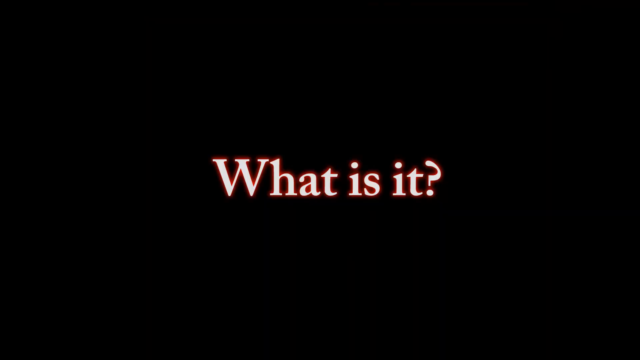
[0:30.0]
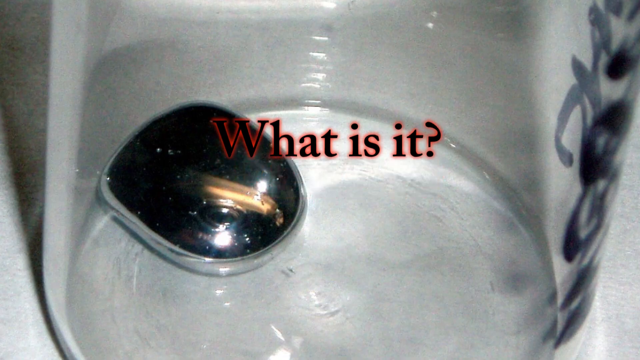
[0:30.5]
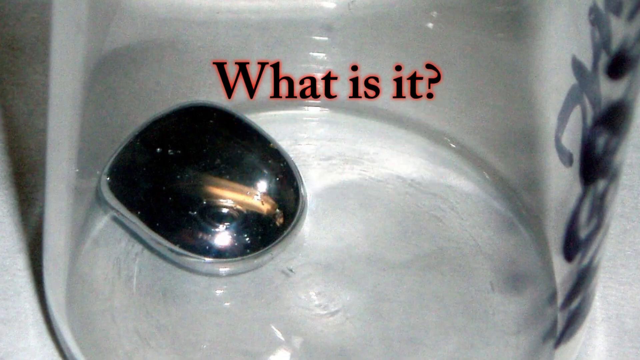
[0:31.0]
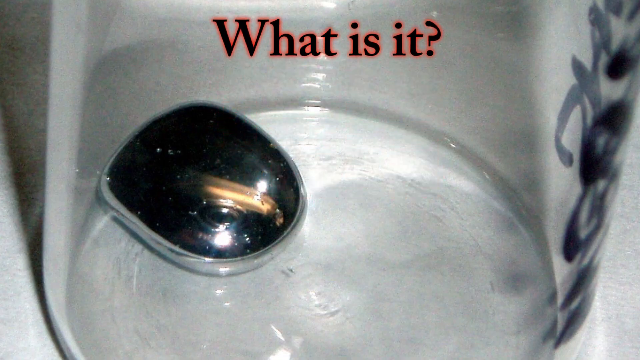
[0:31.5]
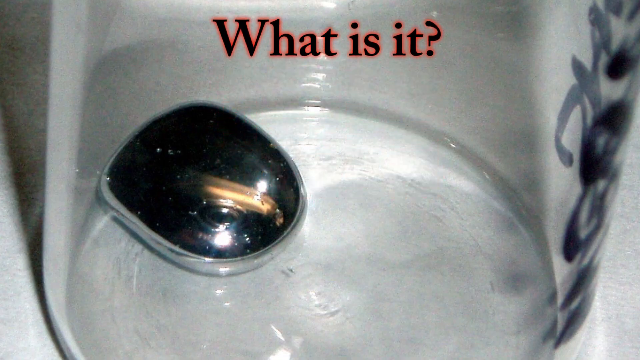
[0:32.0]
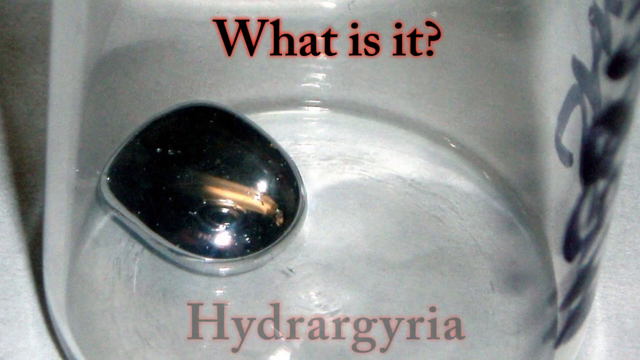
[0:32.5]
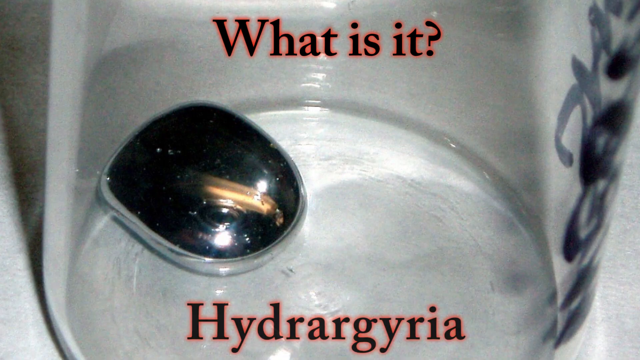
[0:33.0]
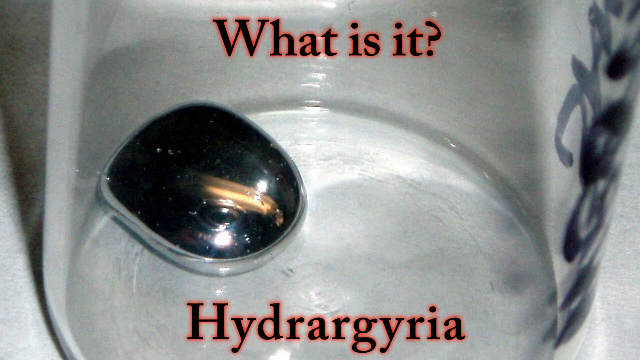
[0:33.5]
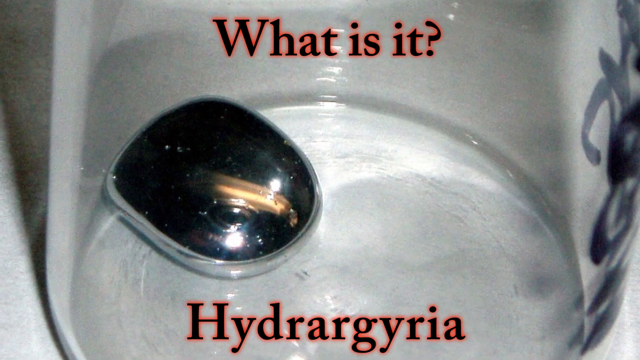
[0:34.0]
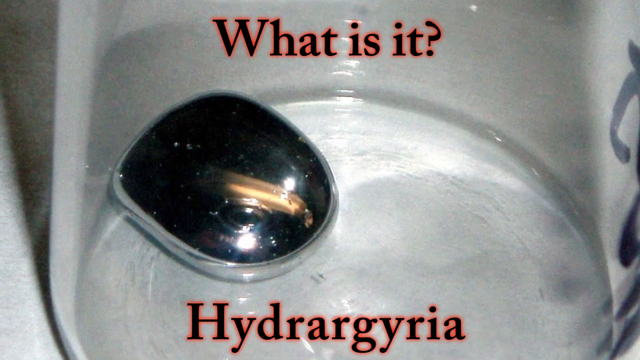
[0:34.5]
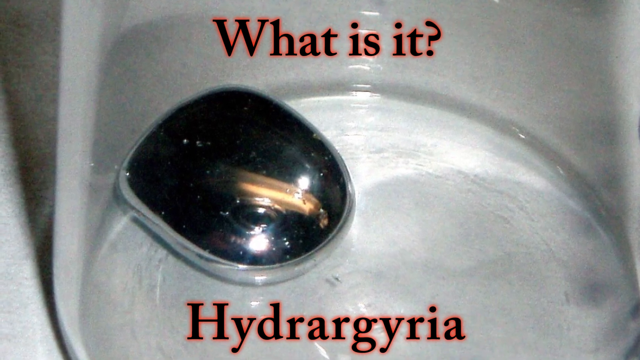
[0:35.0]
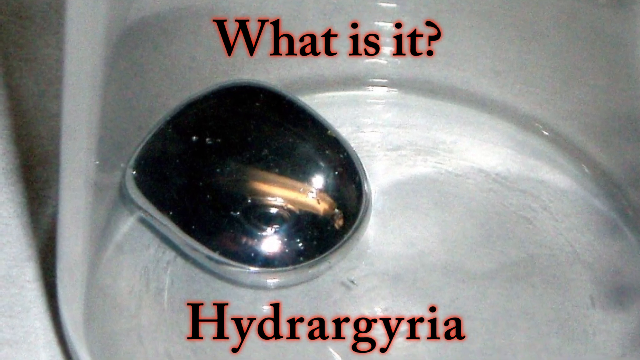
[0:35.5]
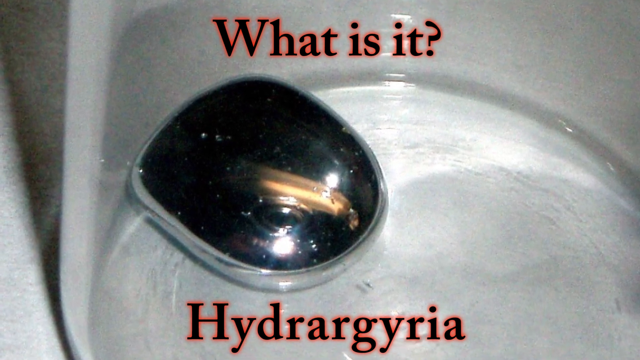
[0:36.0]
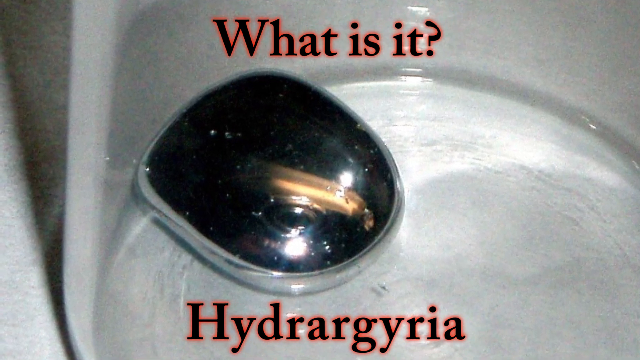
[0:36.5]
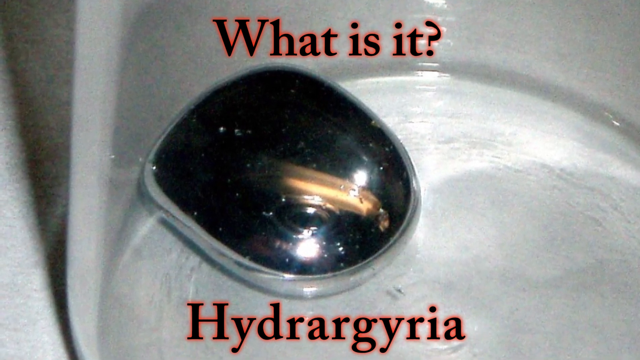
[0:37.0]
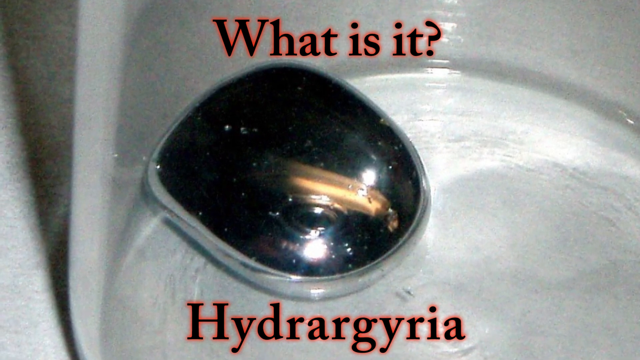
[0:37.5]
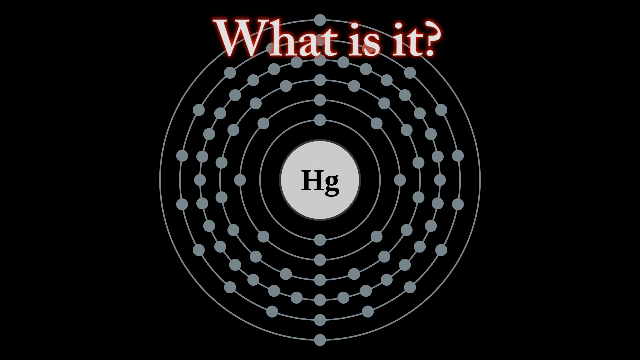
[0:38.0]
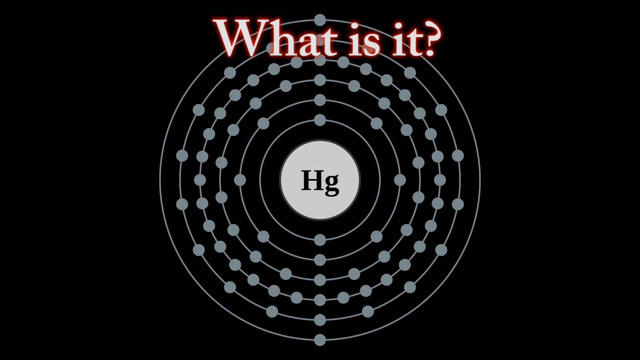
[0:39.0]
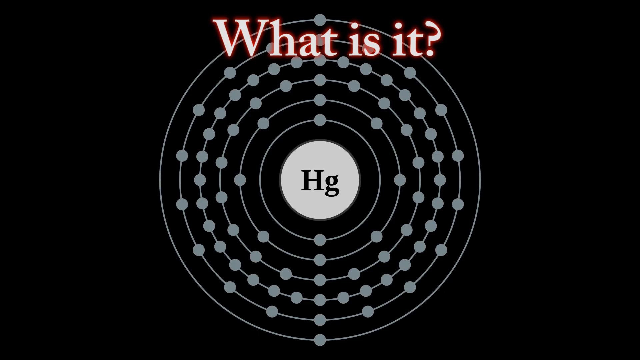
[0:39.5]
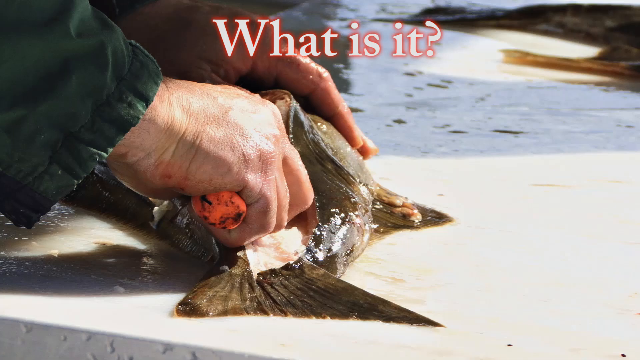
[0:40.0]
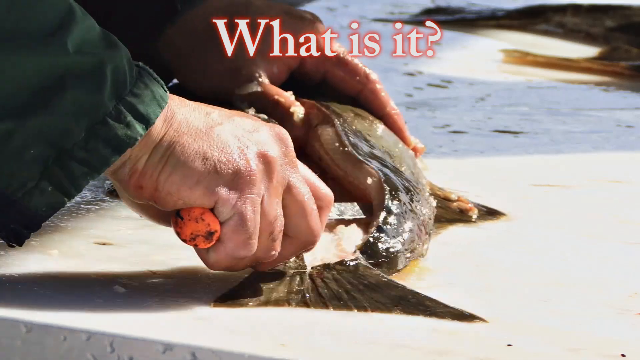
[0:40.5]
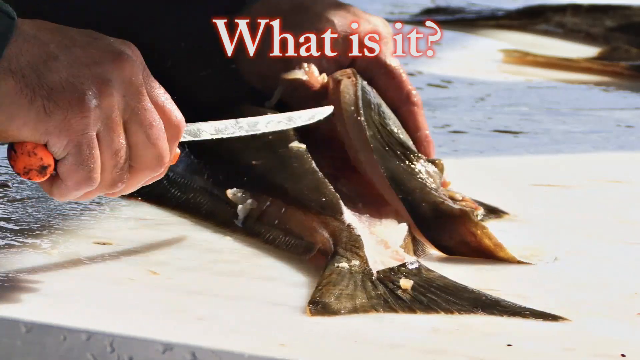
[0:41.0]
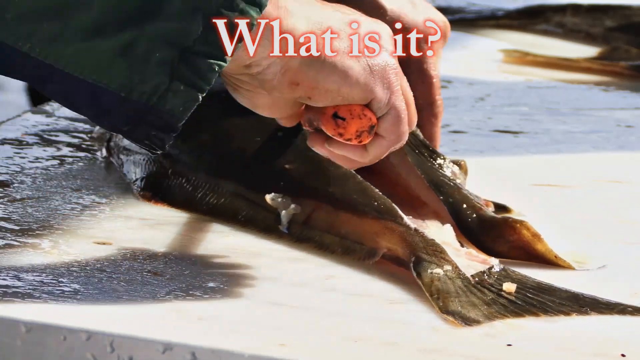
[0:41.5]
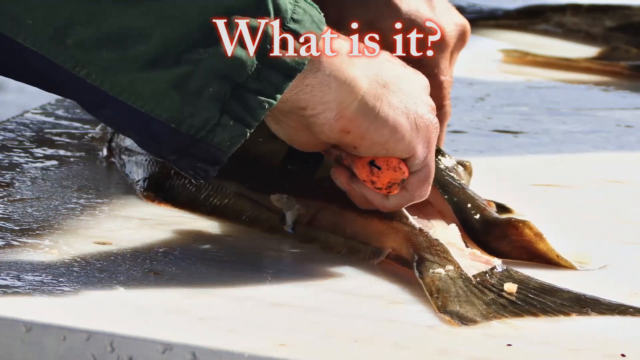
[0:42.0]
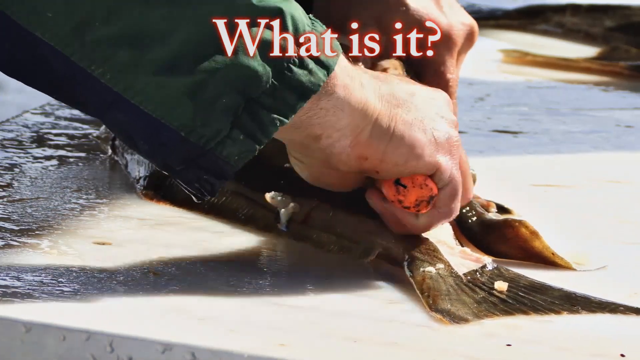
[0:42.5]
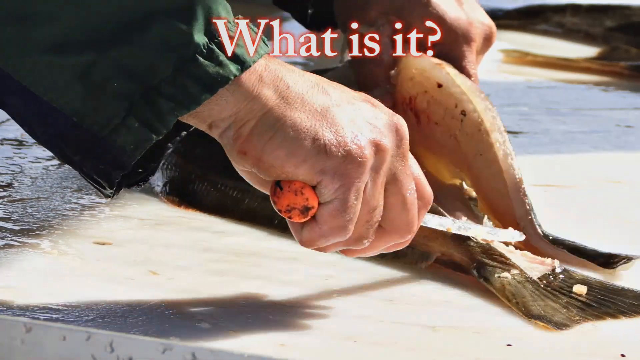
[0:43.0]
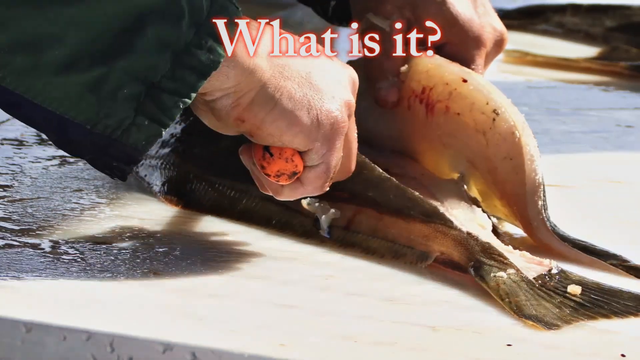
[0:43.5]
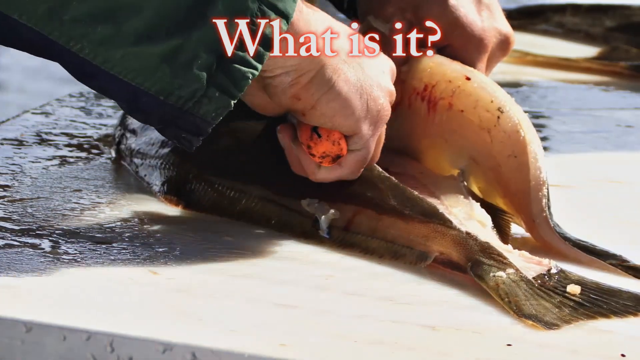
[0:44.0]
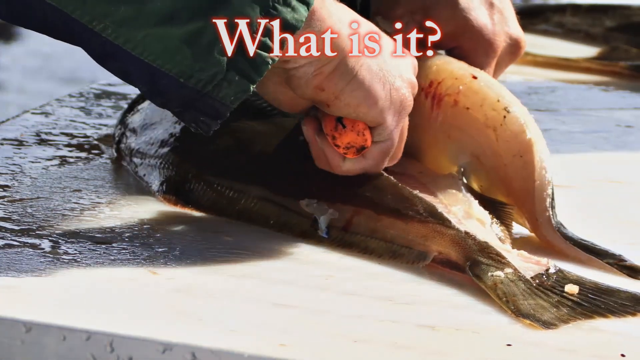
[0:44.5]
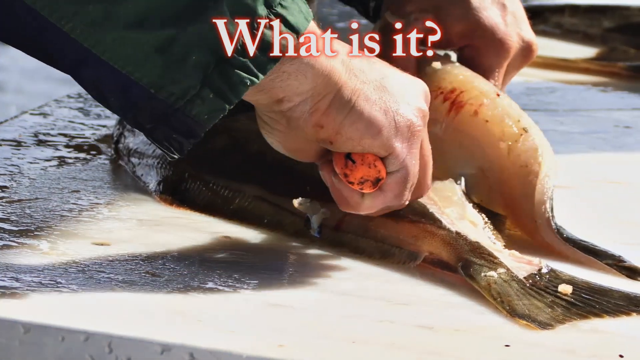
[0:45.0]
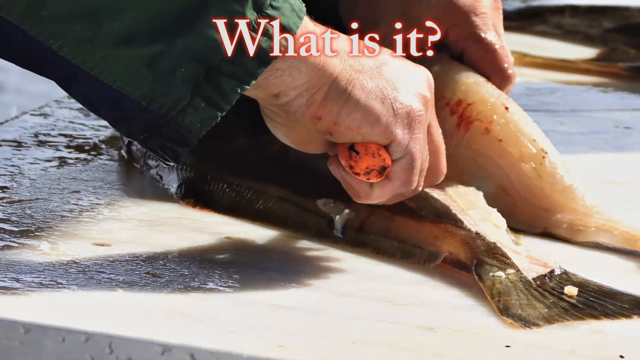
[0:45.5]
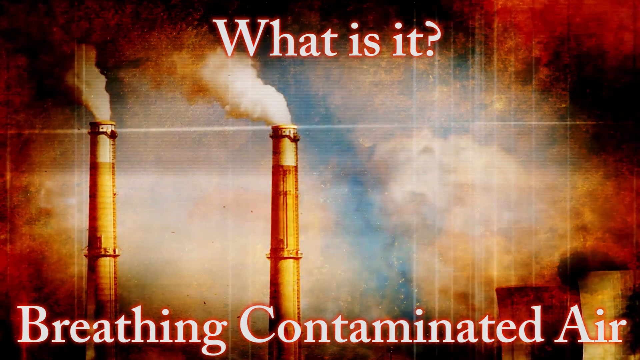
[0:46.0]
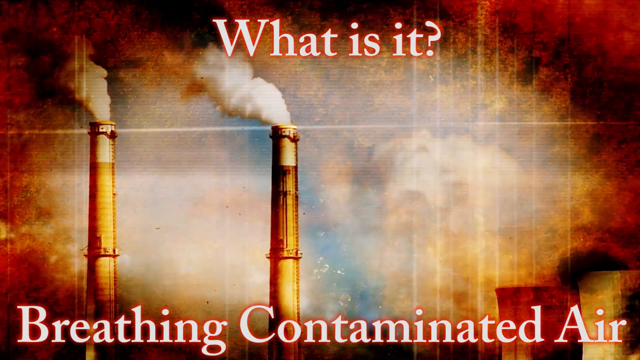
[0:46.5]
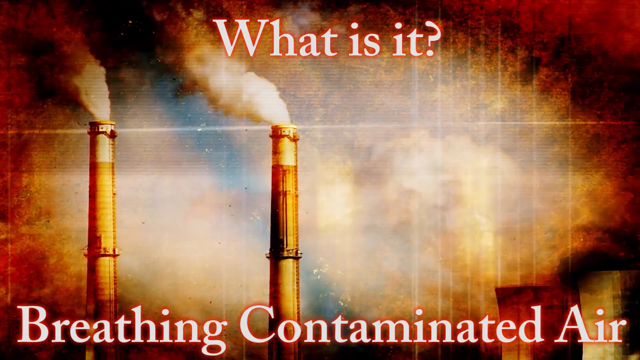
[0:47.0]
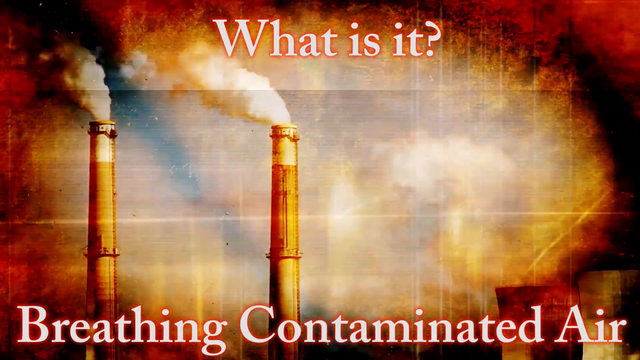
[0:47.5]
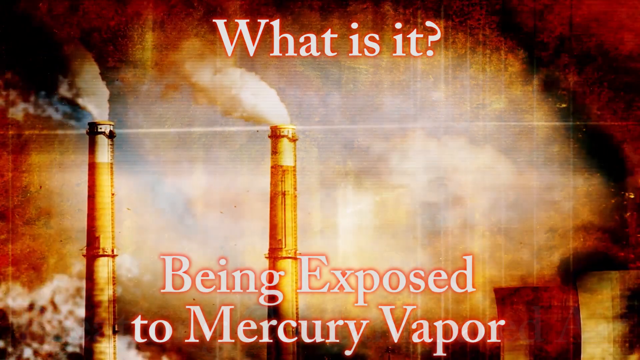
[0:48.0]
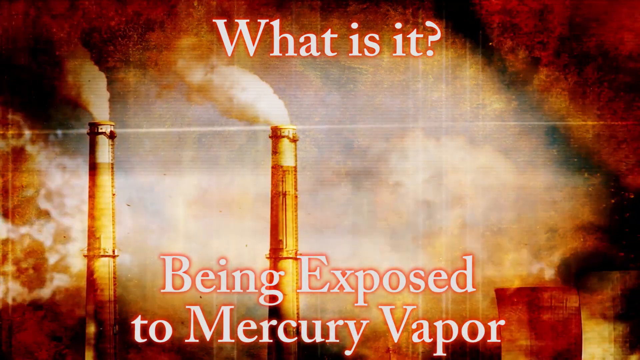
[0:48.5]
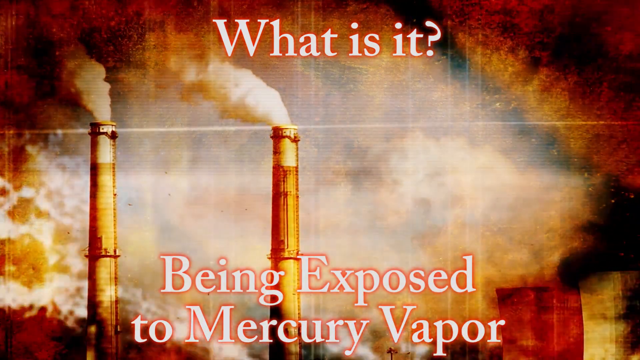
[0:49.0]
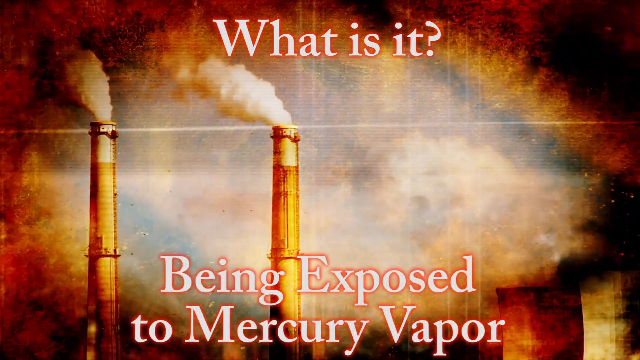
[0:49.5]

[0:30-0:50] The video states that mercury poisoning affects more than half of the people who eat fish every day, and then turns to what causes mercury poisoning. A gentleman cuts a fish that looks delicious. The question "what is it" is posed, followed by being exposed to mercury vapour as an answer.